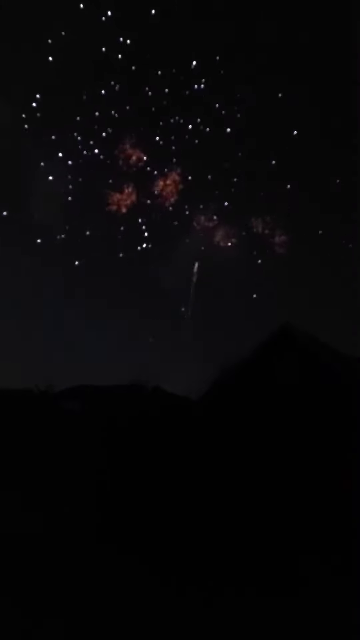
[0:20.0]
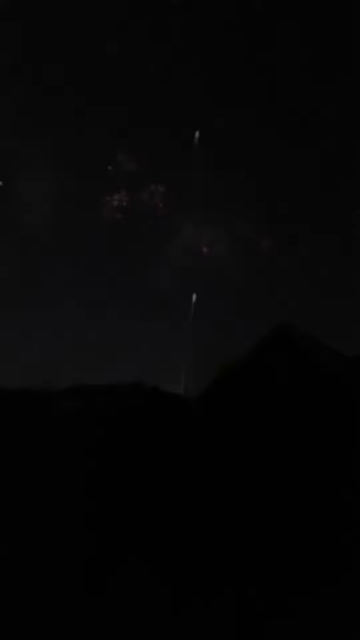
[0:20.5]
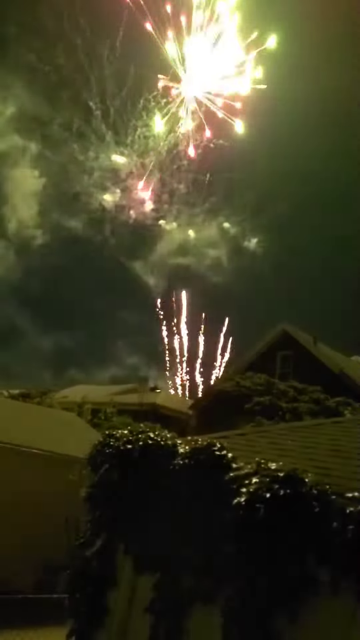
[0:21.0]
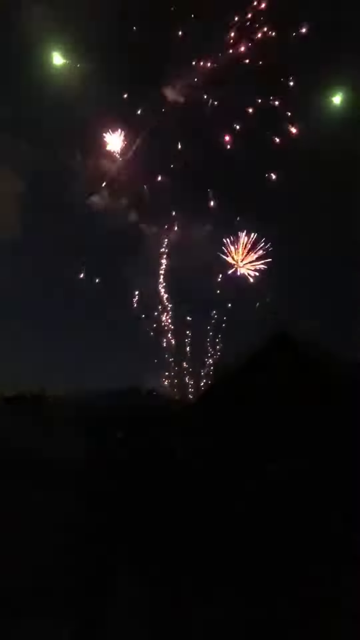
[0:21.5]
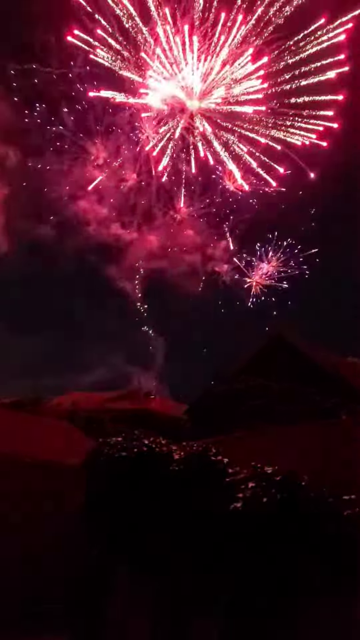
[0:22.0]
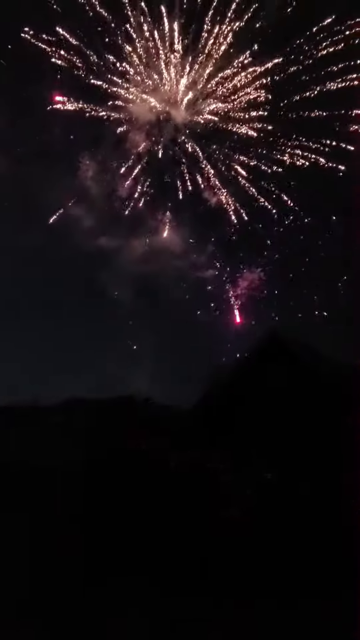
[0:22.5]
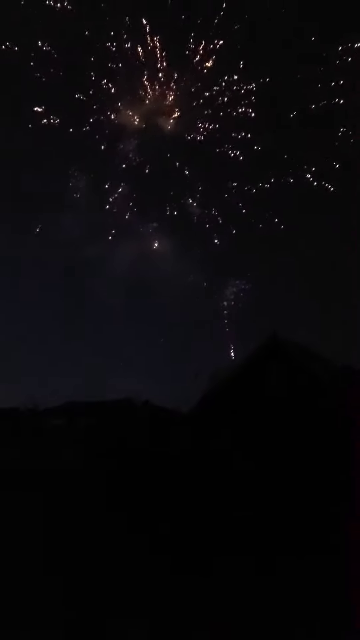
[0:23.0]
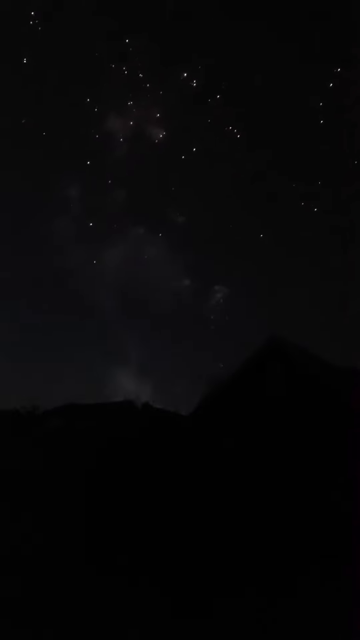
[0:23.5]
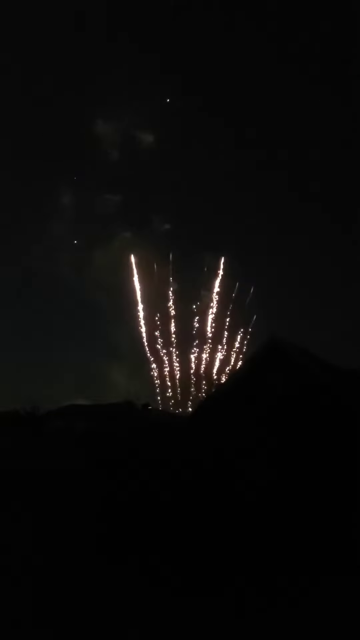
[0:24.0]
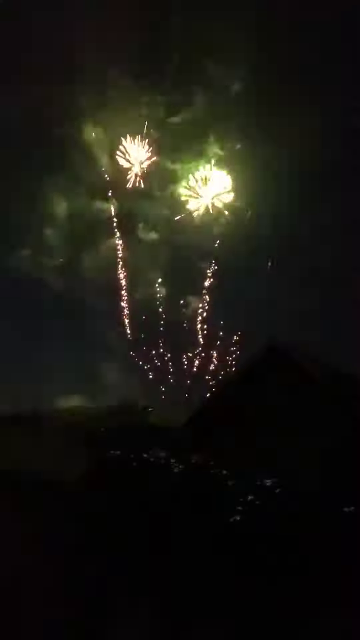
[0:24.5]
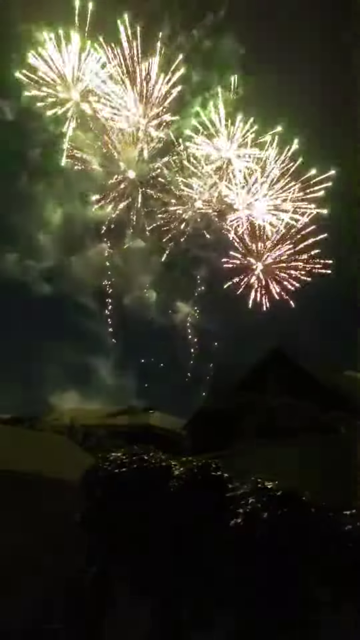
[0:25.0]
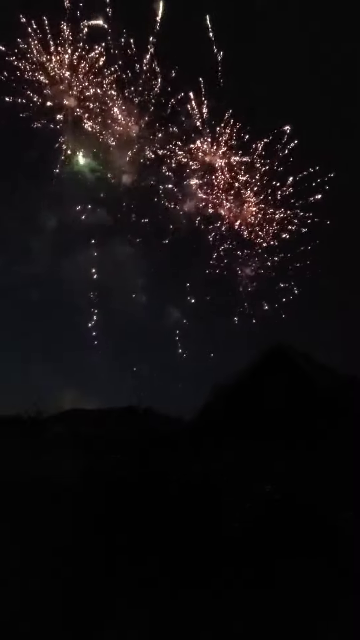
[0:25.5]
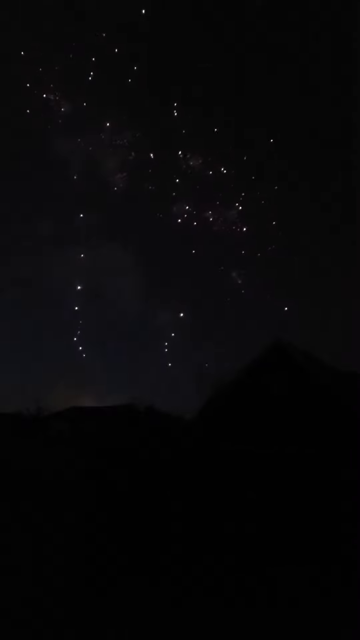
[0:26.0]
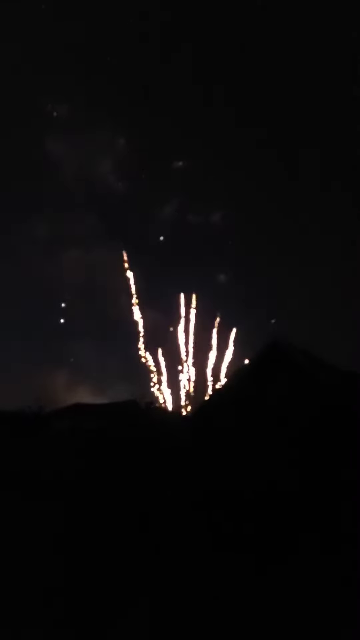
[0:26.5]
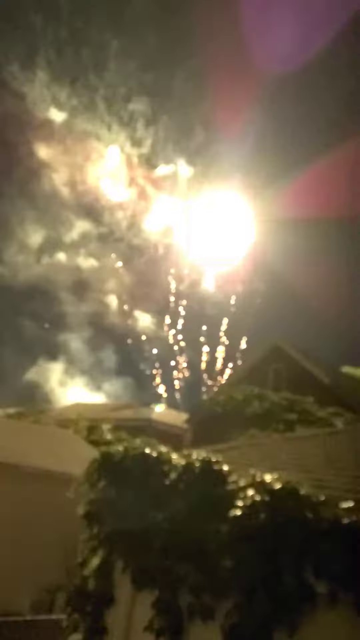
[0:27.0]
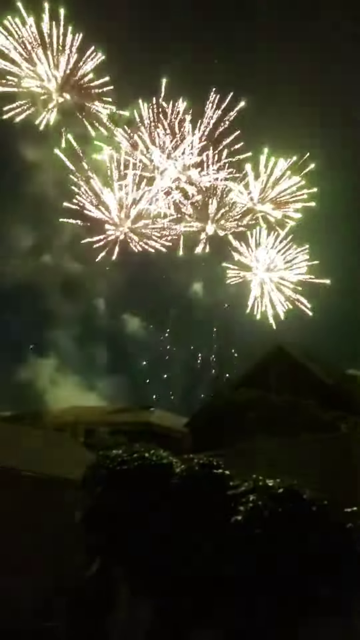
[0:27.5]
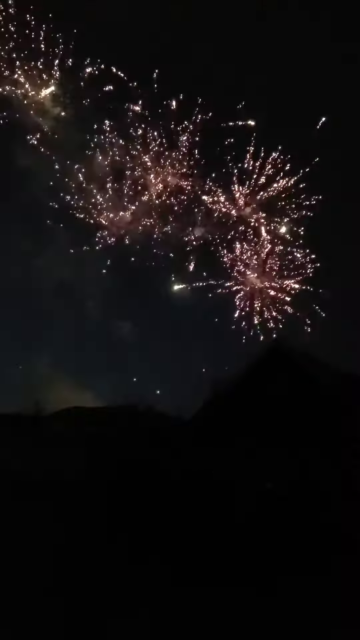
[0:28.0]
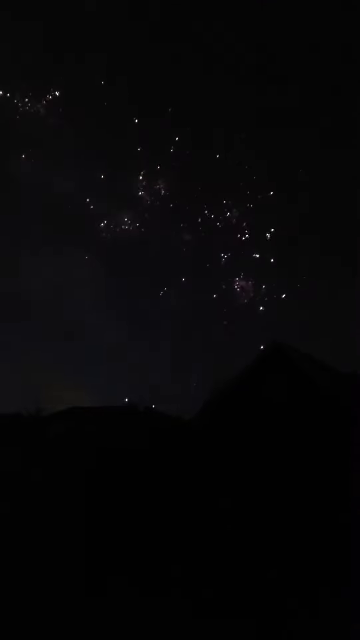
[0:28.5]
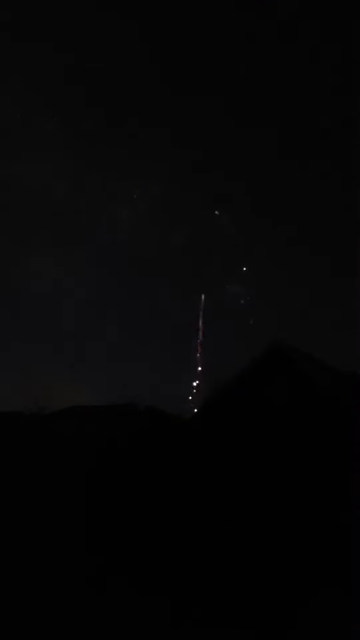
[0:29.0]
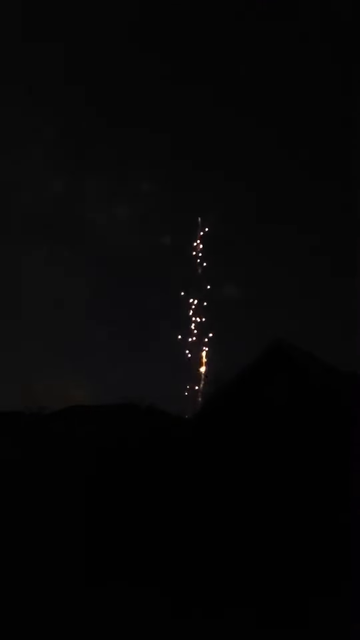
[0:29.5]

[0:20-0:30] Several fireworks are shot into the night sky, which is very dark and almost pitch black, with no stars or moon visible. When the fireworks explode and flash, the setting becomes visible: a farm with rows of crops in the foreground. What looks like a pyramid appears to be a house rather than a barn, since it has windows and looks more like a residence.